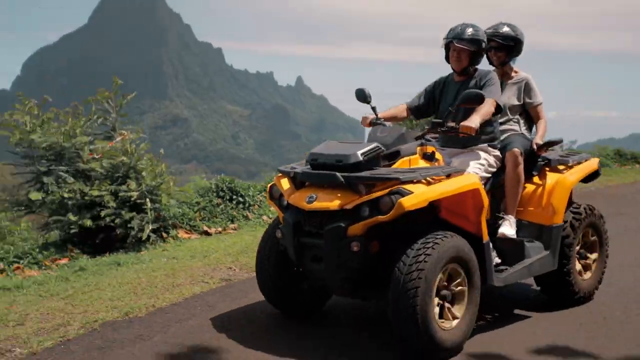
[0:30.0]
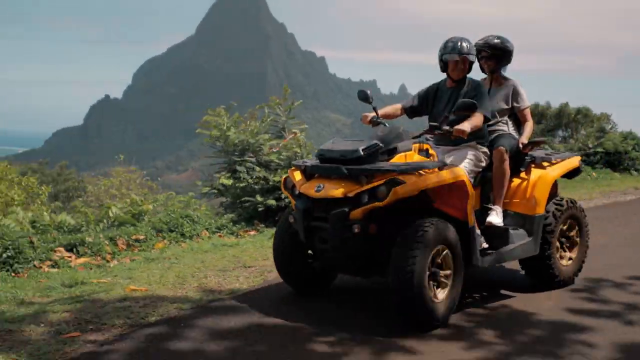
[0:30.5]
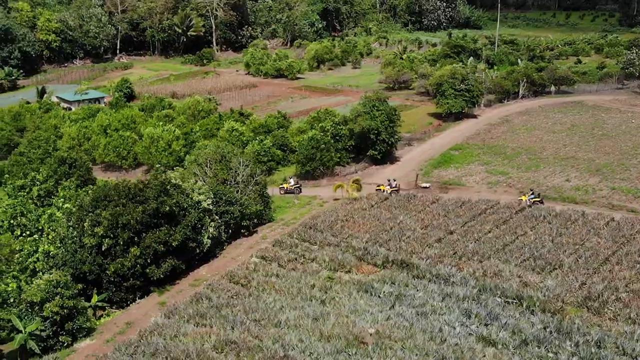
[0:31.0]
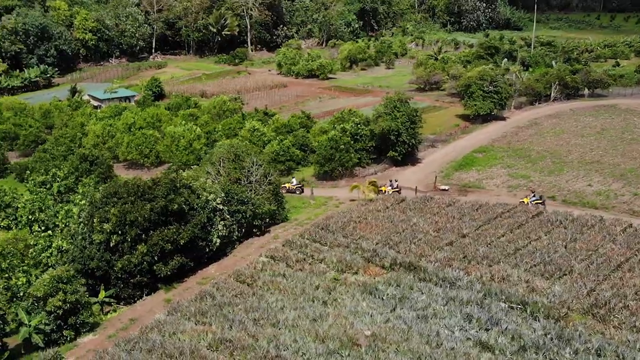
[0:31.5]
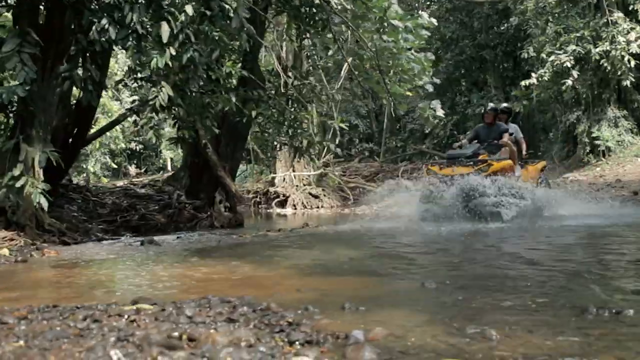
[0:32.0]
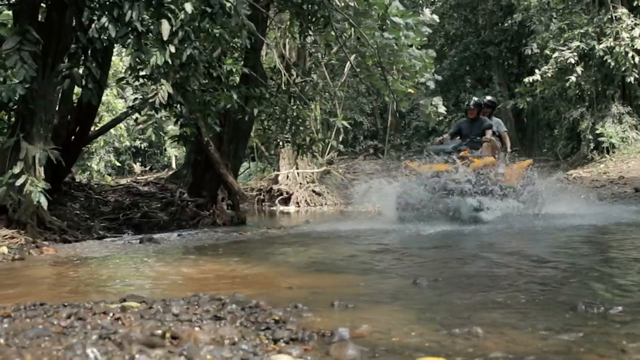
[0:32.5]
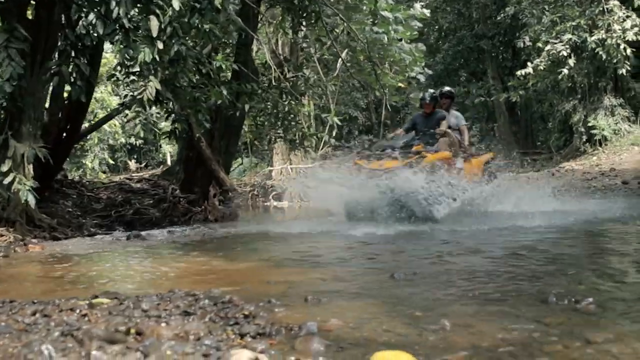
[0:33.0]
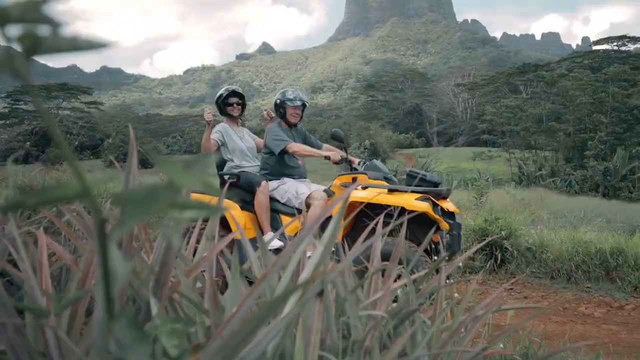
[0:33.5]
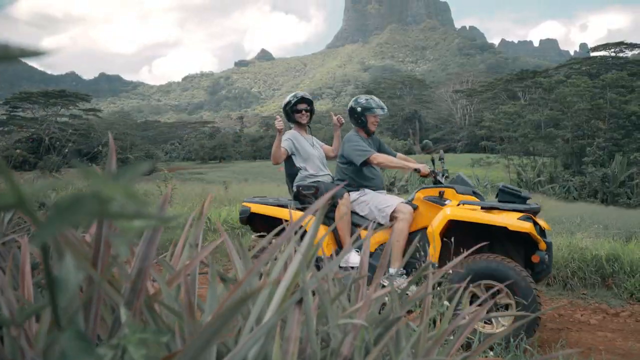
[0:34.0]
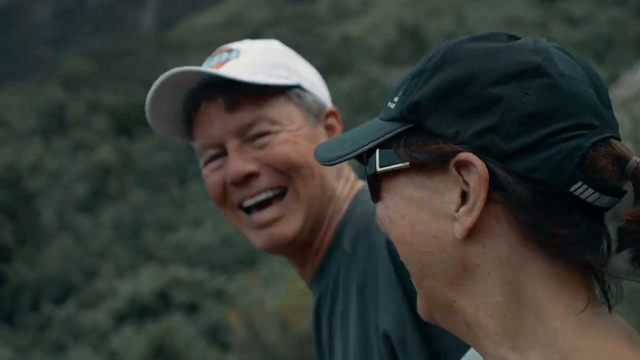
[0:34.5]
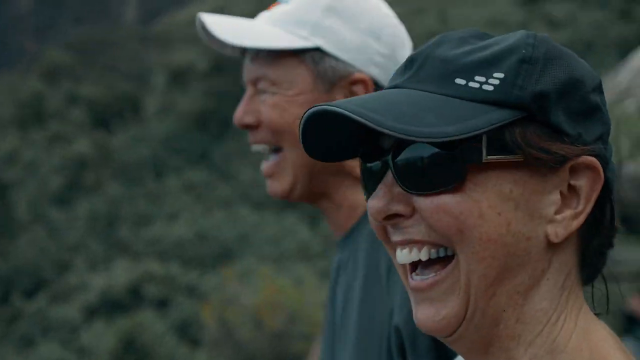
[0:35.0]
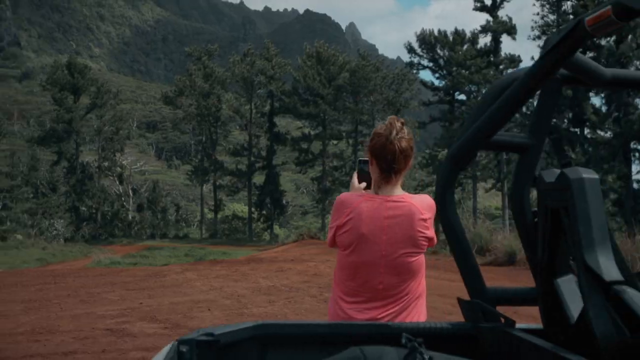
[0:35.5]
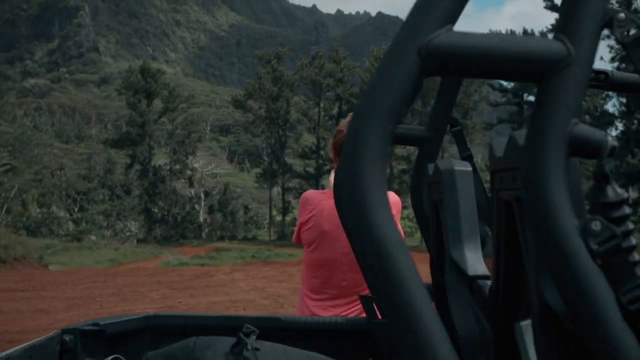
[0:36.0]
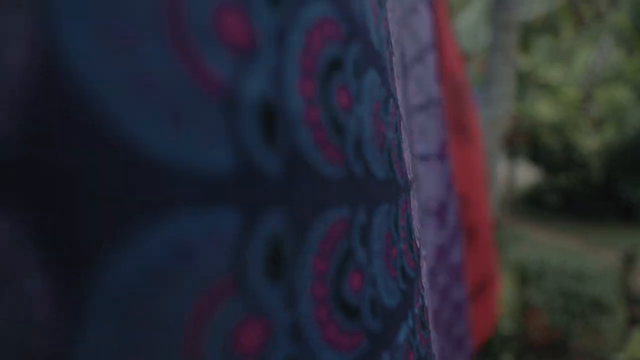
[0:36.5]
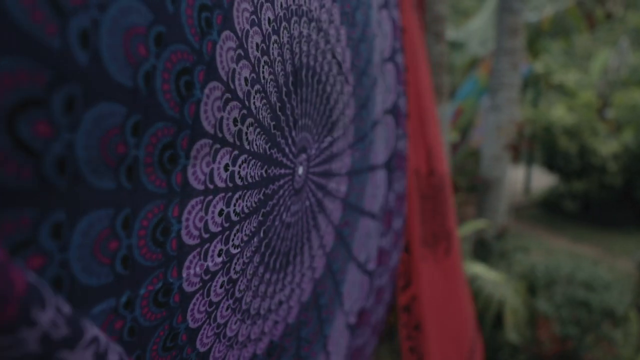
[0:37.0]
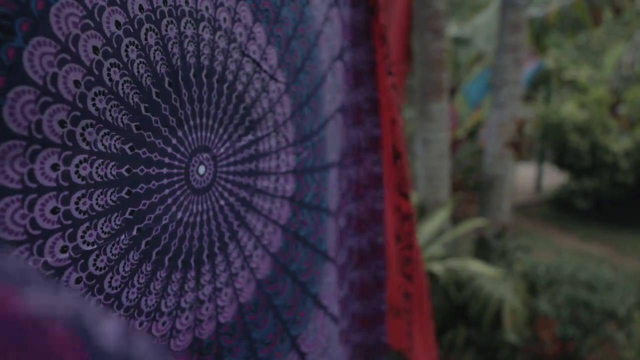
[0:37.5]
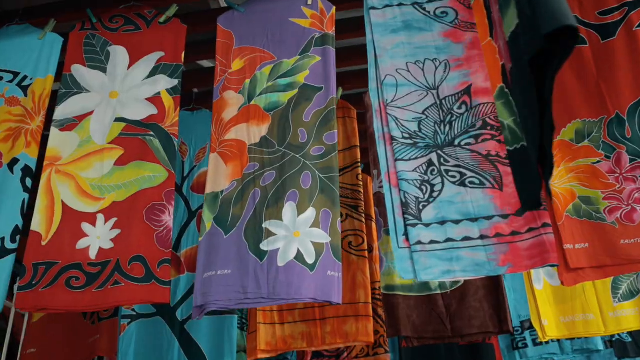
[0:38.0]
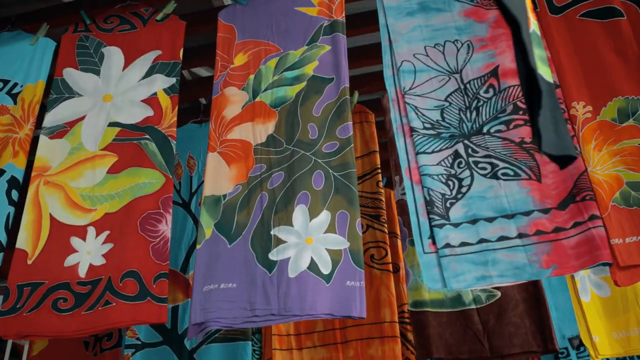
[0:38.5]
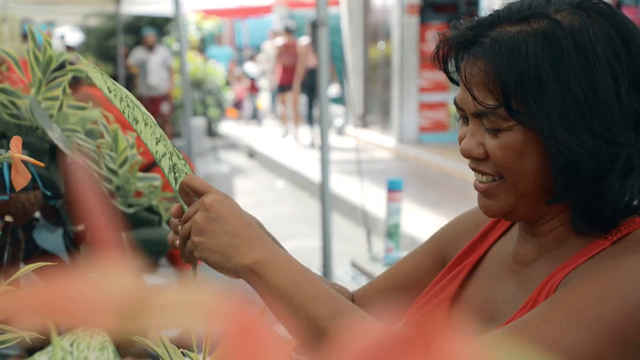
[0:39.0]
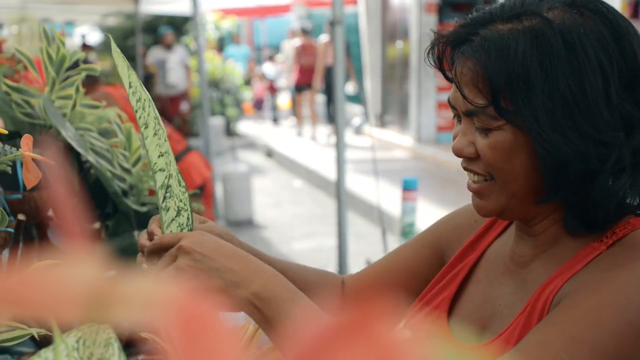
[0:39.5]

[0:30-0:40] Two people drive on an ATV, and then other people on ATVs go down a road surrounded by many green trees. They drive through a body of water, and the water splashes up onto the ATV and the riders. In another scene, two people are on an ATV, and one smiles and gives a thumbs up in approval. A man and a woman, both wearing hats, laugh and smile; the woman wears sunglasses. A woman stands outside next to her ATV, holding up her phone and recording the view. What look like purple and red tapestries appear, followed by another view of many multicolored tapestries hanging, with different floral patterns. A woman holds a plant in her hand.